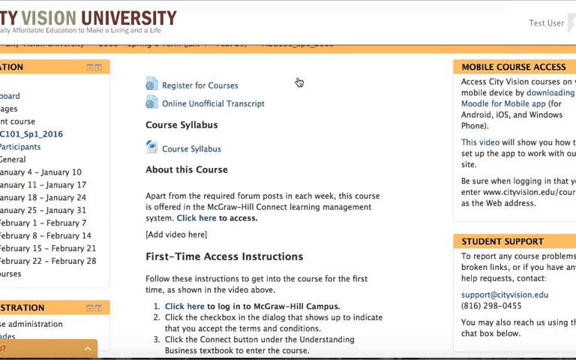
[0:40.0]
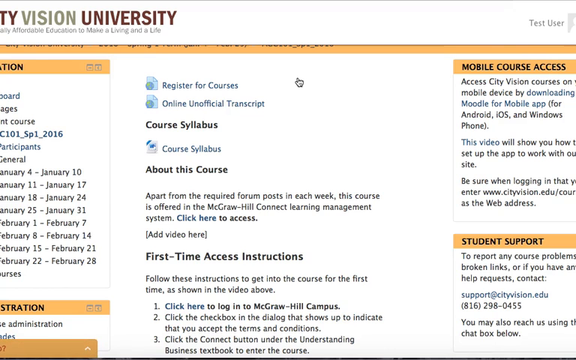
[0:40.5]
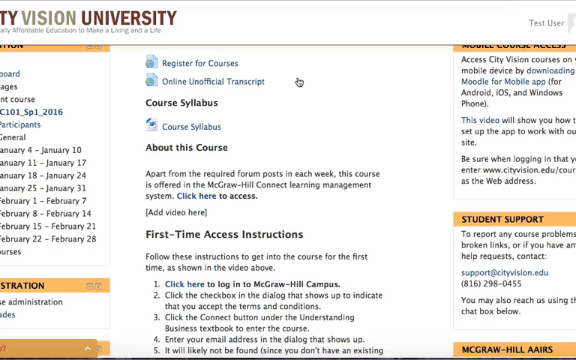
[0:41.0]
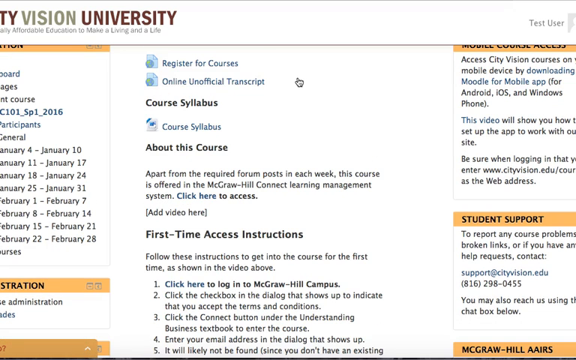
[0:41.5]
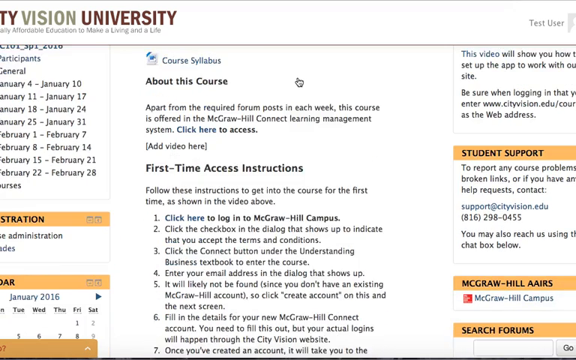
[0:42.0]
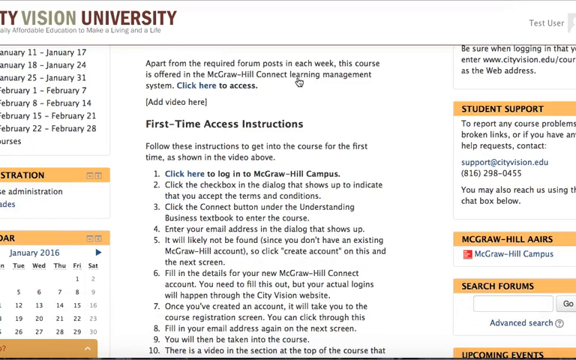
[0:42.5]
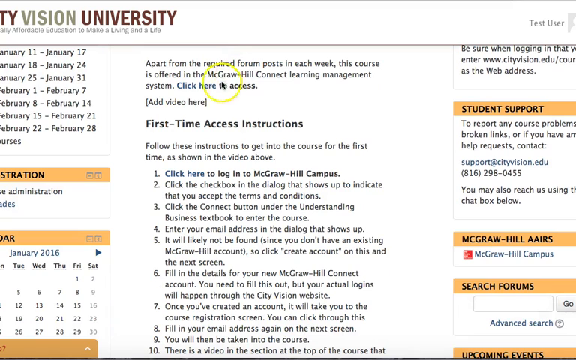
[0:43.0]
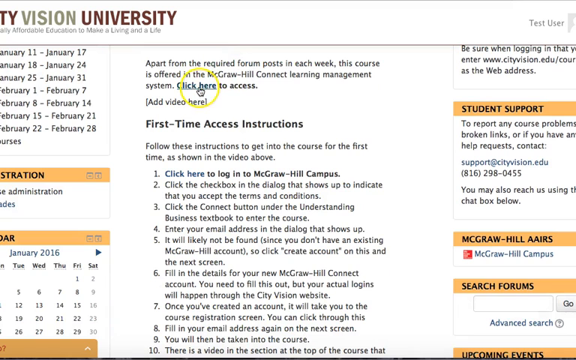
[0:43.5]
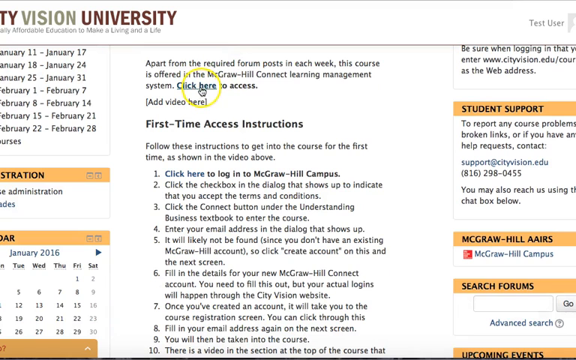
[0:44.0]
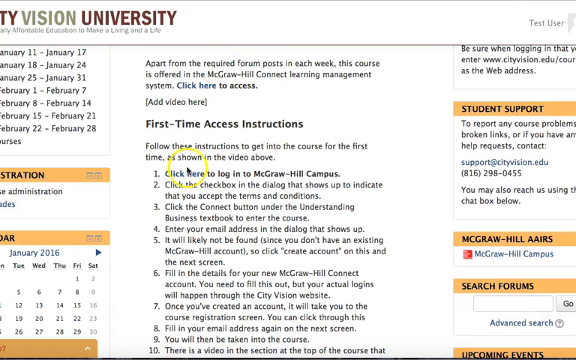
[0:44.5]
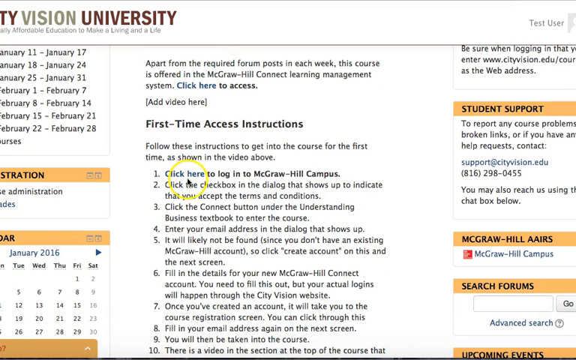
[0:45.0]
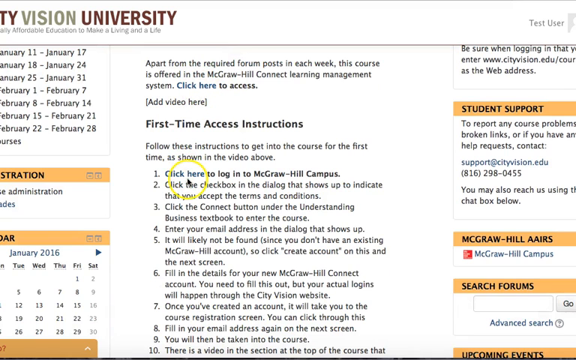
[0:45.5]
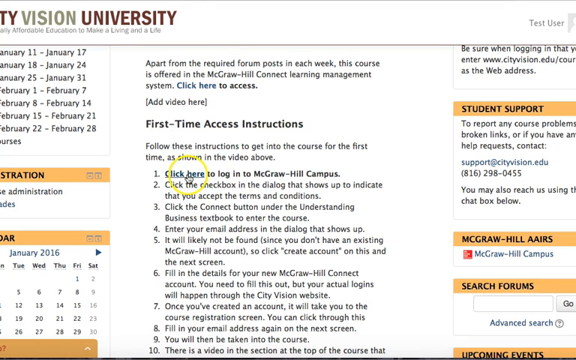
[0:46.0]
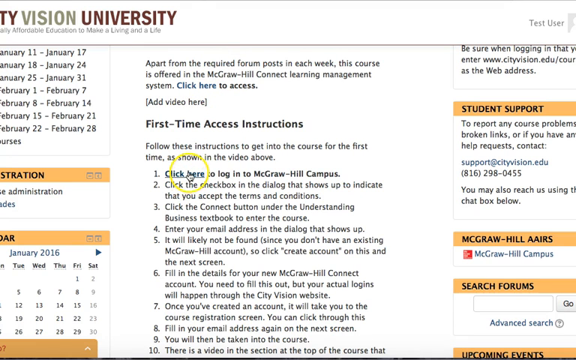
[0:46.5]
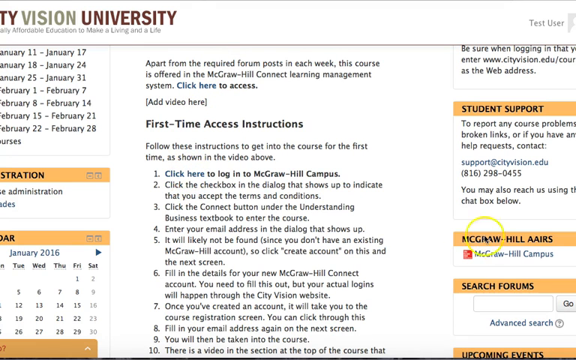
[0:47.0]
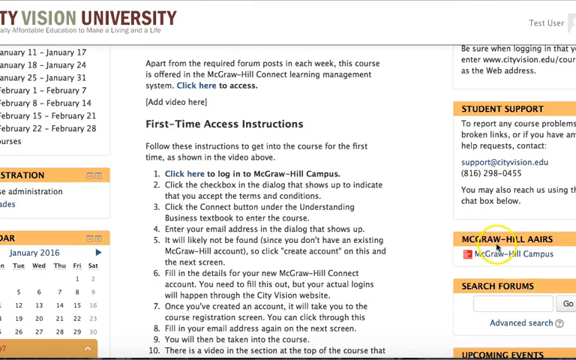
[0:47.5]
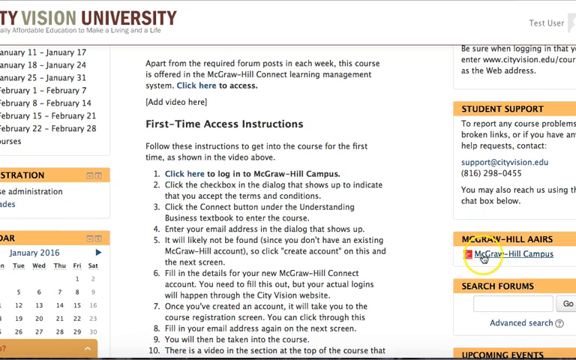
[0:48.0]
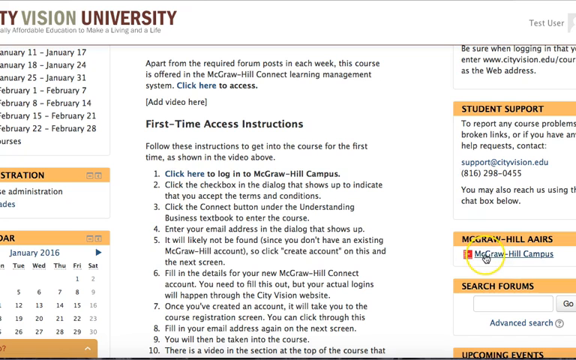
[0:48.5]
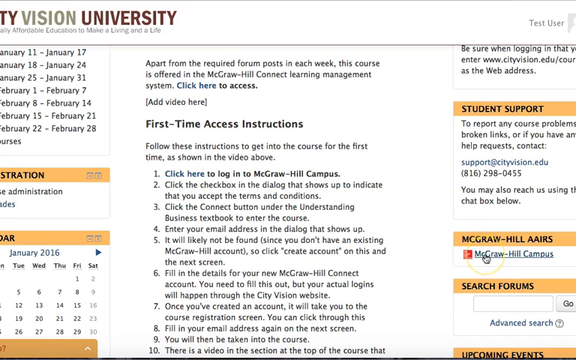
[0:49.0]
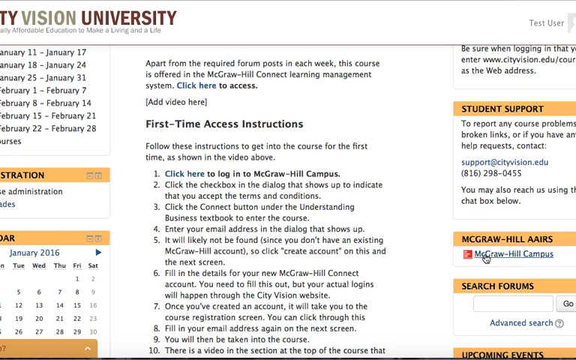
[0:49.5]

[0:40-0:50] The main page of the course appears, with items such as the course syllabus, a description about the course, first time access instructions, how to download the mobile app, and student supports. On the left side are what appear to be the assignments, readings, and due dates for different things. The page scrolls down a little to where it says "access your textbook", which is a McGraw-Hill campus. The person points out three different places to click to access the textbook: one in the about the course section, a second in the first time access section, and a third on the right side reading "McGraw-Hill access".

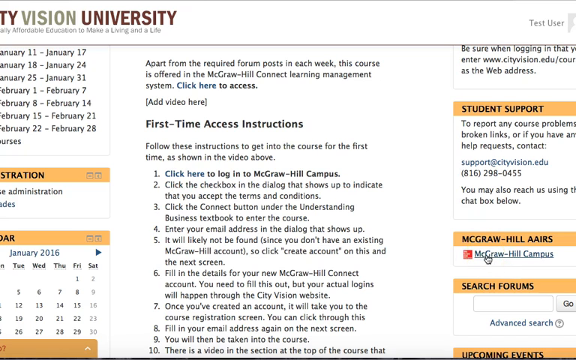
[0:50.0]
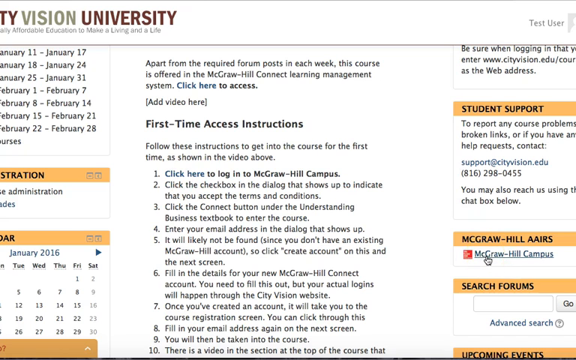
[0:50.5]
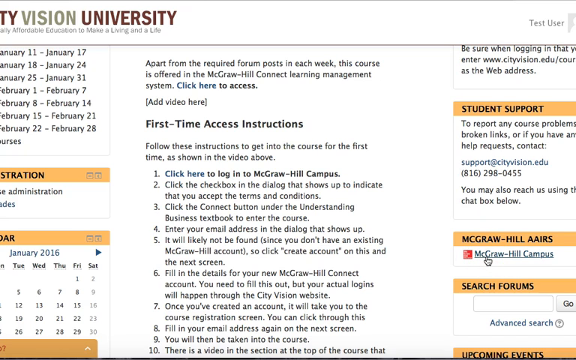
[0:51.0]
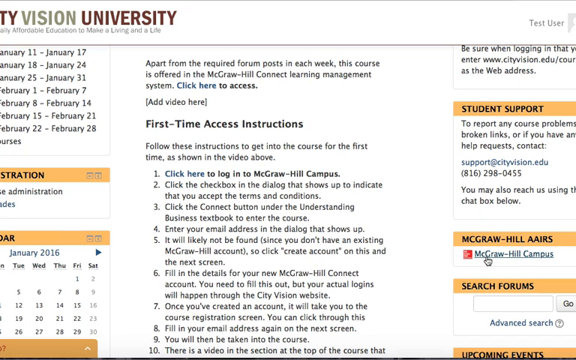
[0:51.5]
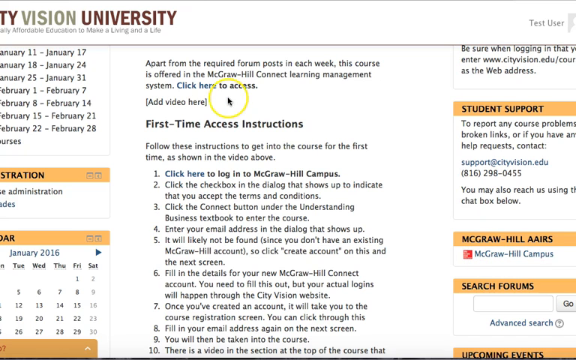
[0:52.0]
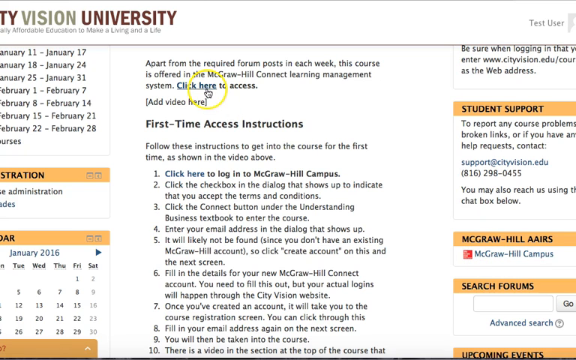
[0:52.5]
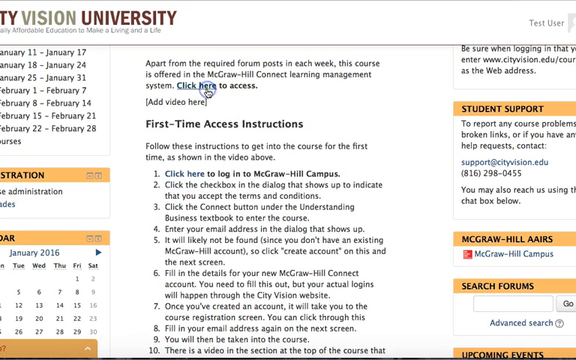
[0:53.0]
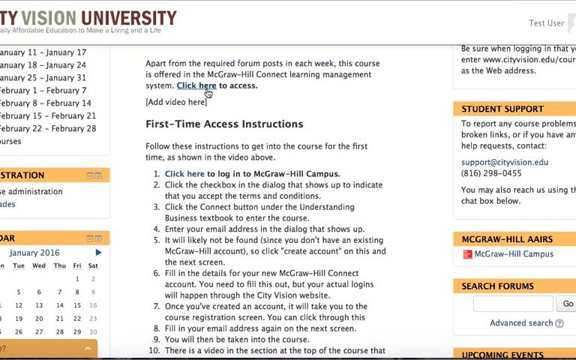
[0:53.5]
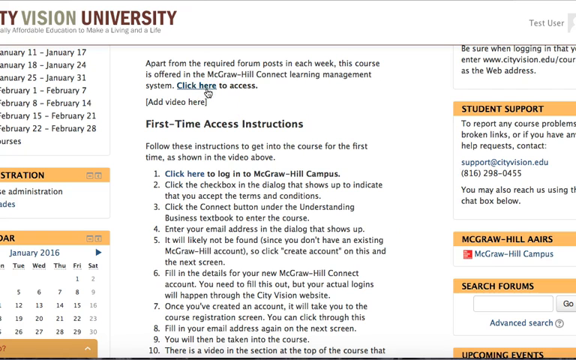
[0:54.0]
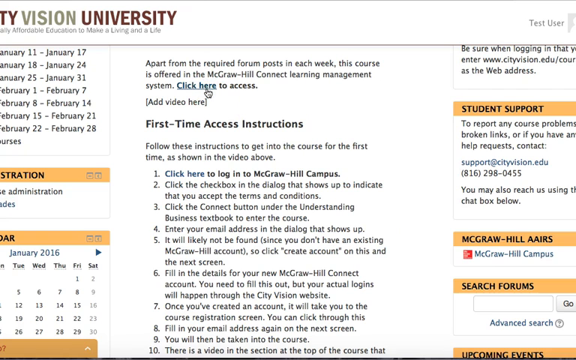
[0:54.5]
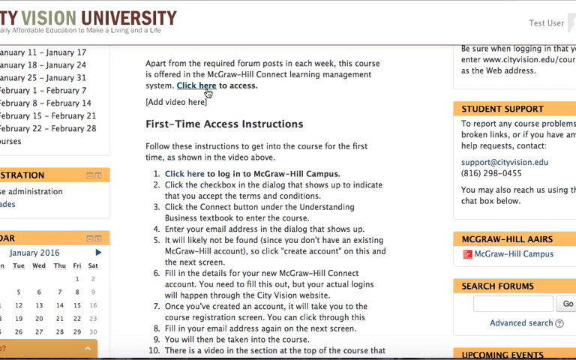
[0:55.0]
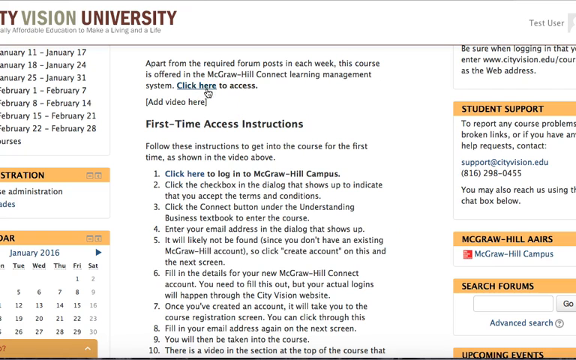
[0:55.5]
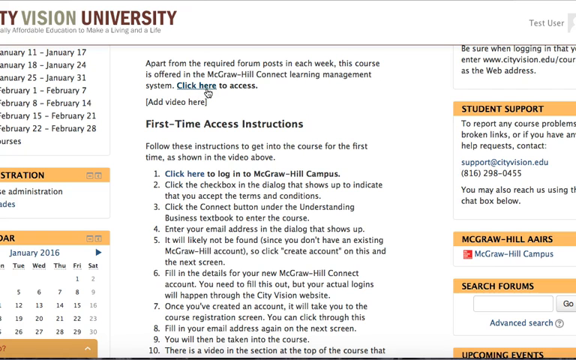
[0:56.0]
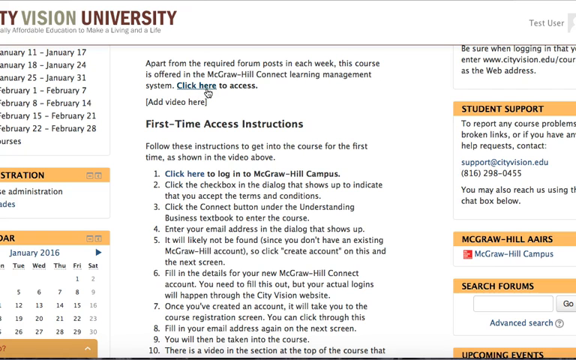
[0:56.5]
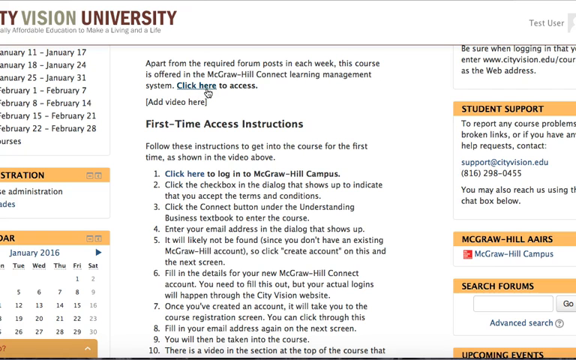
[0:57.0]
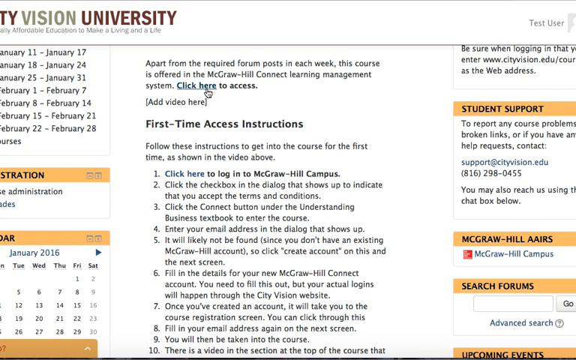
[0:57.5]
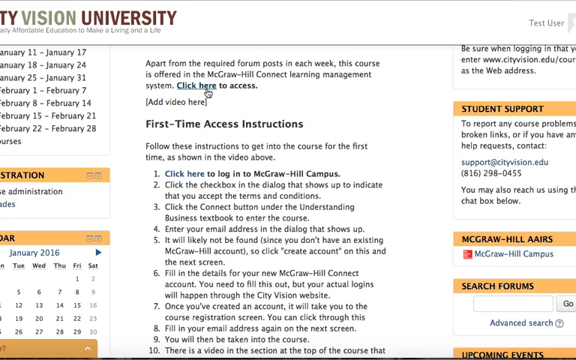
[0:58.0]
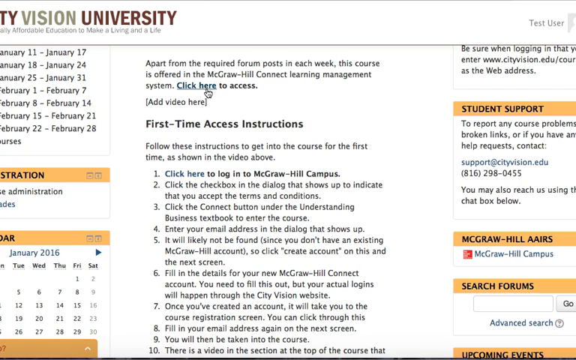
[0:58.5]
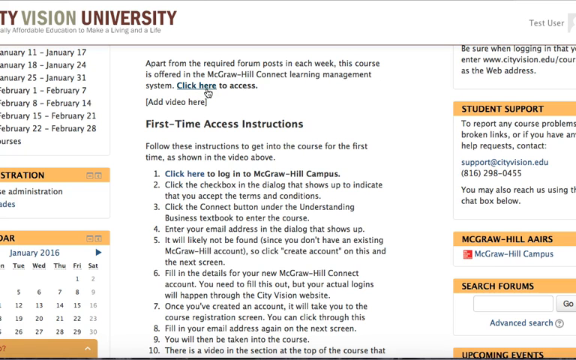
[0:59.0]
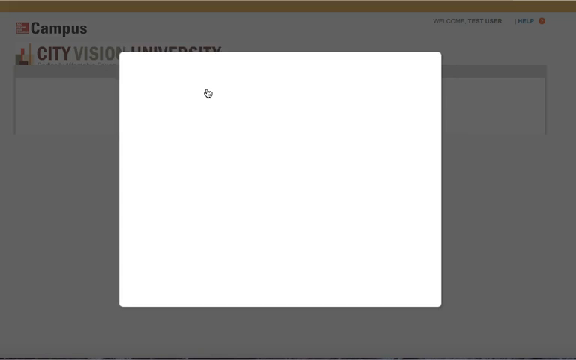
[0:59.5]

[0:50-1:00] The mouse hovers over the McGraw Hill campus item on the right-hand side, underneath student support. It looks like it almost clicks there, but instead the mouse dashes up to the course description and clicks the link that says "click here to access". It takes a few seconds before anything seems to load; something then loads quickly, but the shot cuts out before it can be seen.